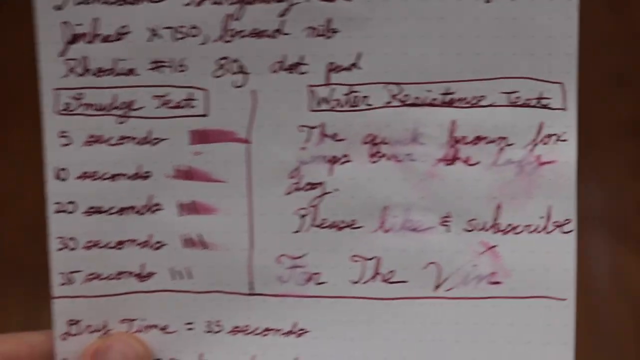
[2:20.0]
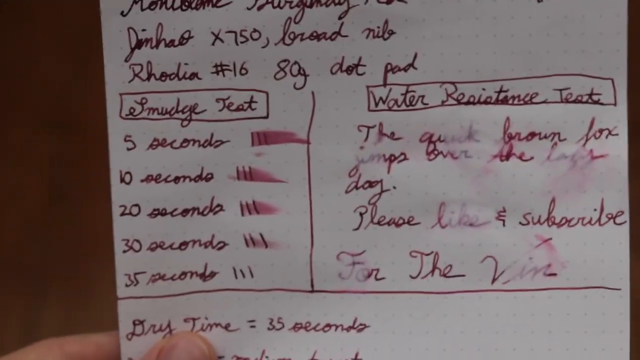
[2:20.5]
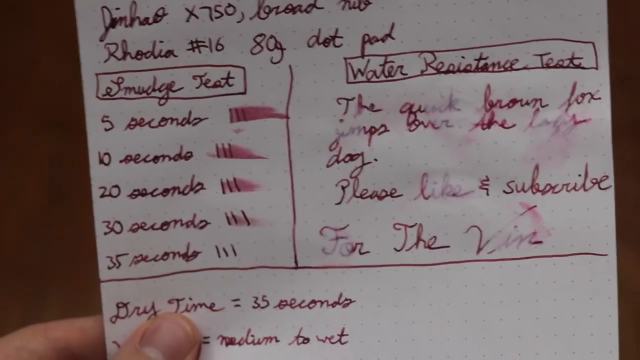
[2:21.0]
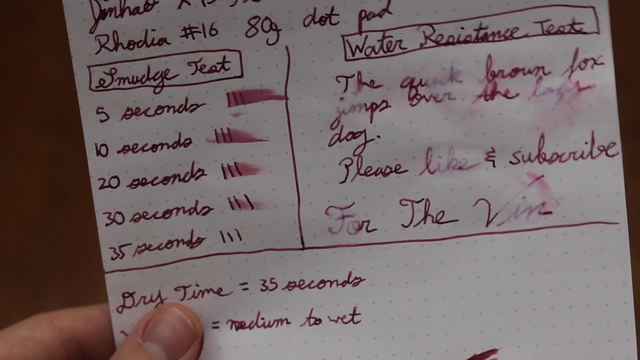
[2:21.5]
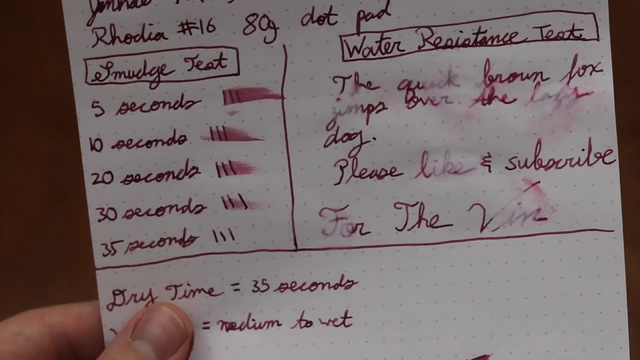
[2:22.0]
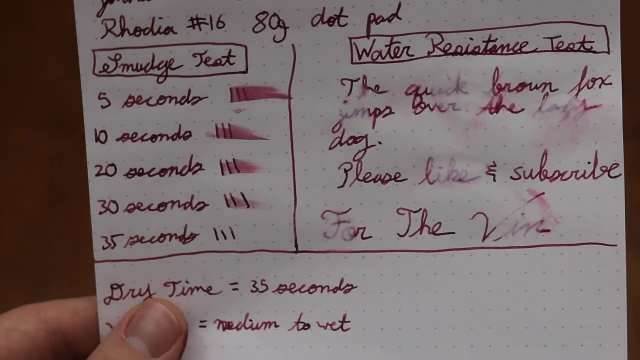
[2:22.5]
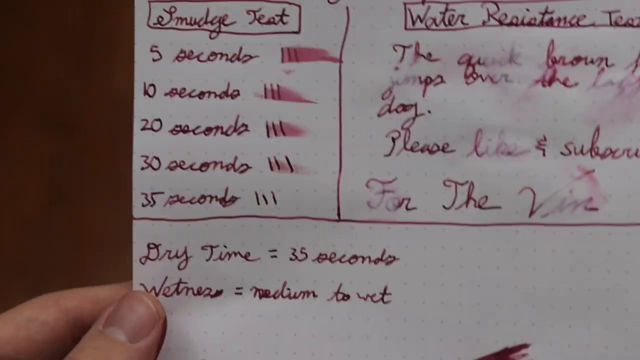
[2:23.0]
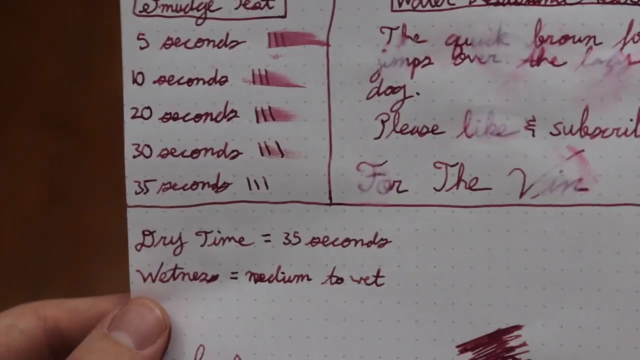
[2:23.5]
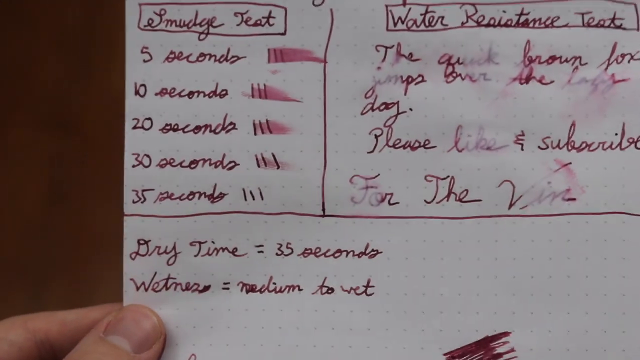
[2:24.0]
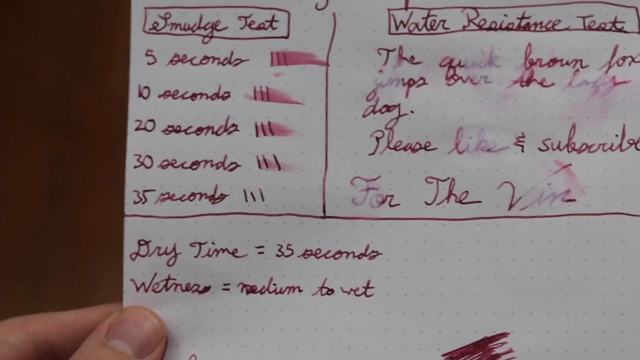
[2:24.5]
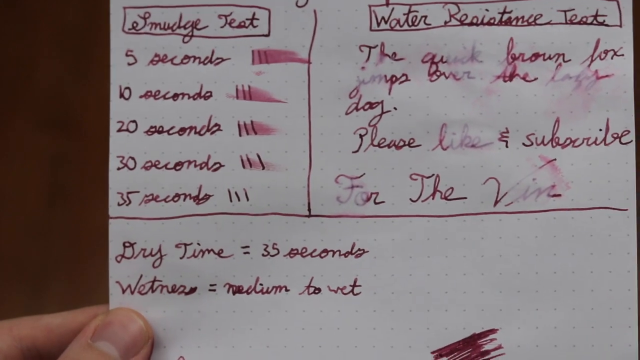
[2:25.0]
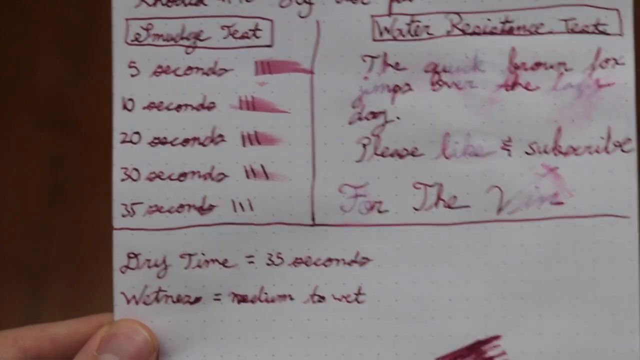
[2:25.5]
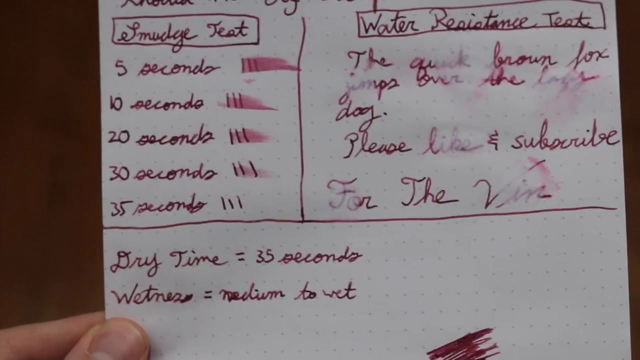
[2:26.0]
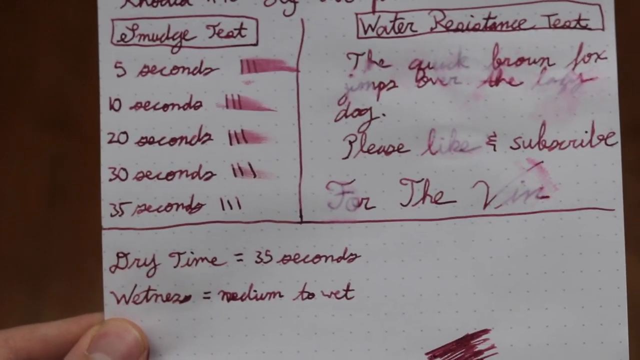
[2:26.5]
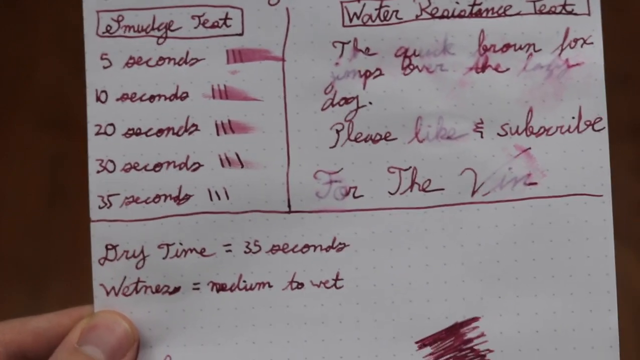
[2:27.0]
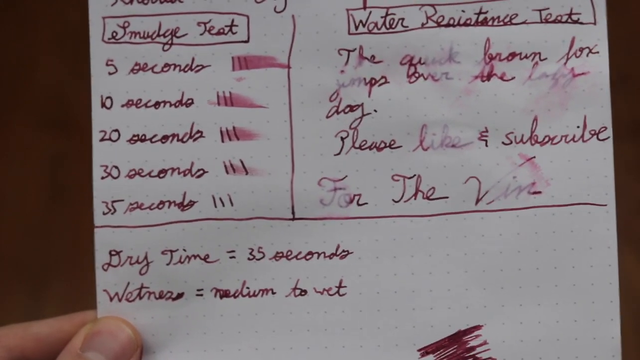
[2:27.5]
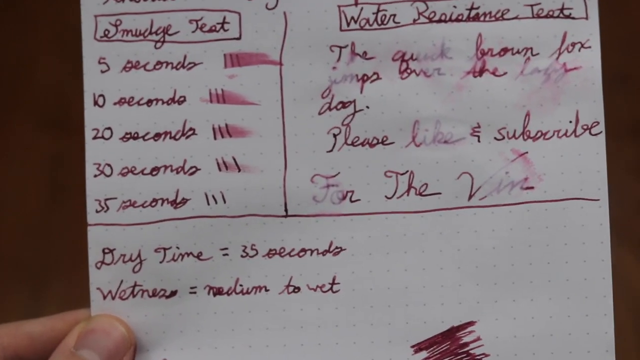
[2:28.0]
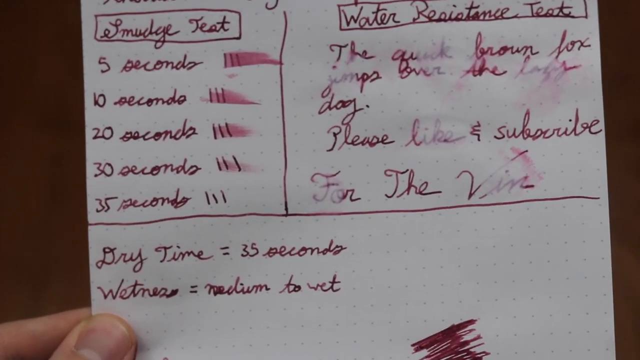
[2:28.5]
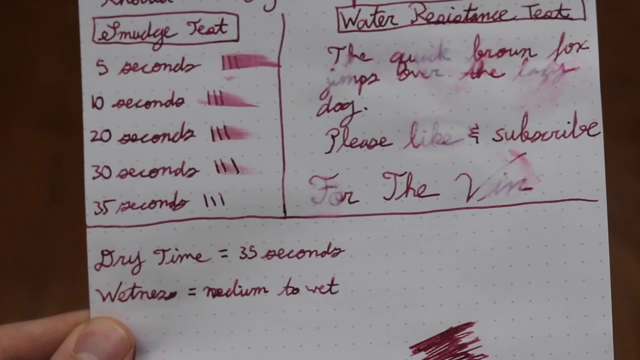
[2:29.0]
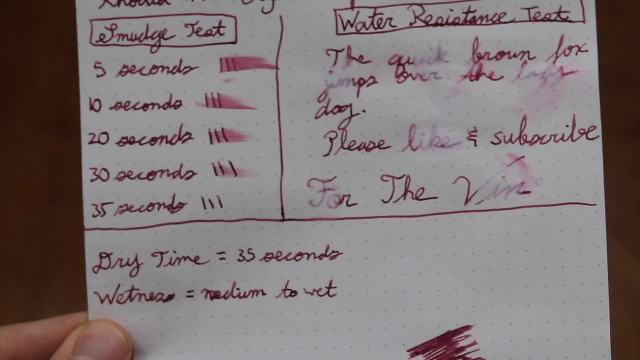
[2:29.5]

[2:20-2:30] The presenter continues to hold the paper, which shakes up and down within the frame. The bottom part of the paper is now clearly visible, with a brief summary showing that the dry time equals 35 seconds and the wetness equals "medium to wet".